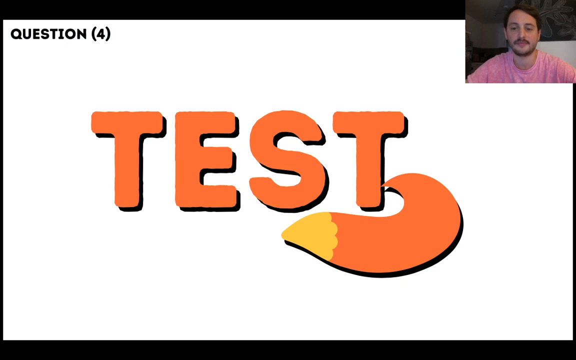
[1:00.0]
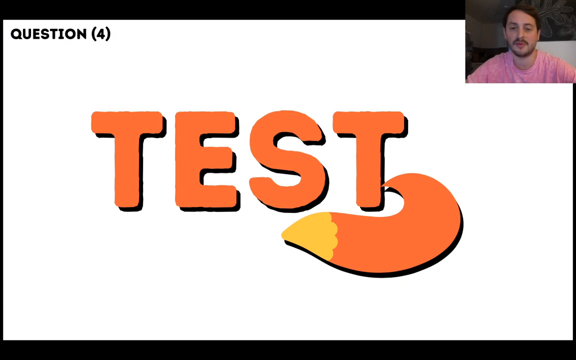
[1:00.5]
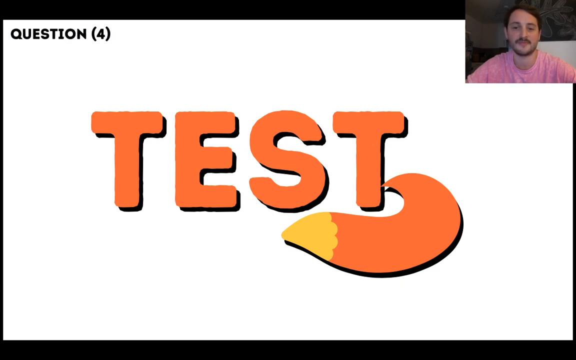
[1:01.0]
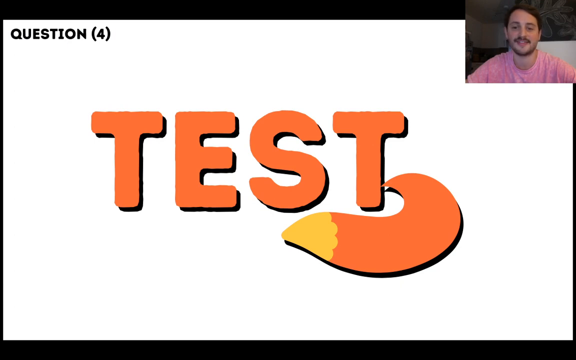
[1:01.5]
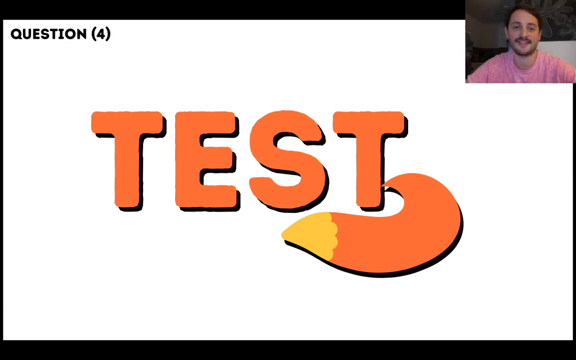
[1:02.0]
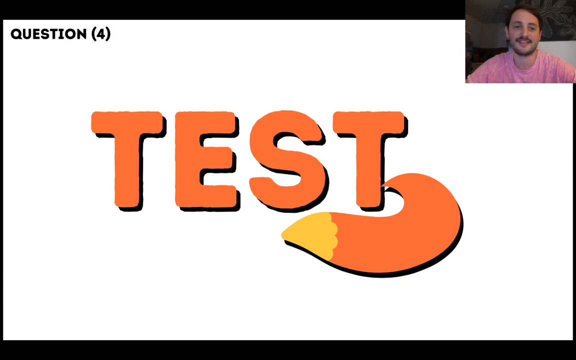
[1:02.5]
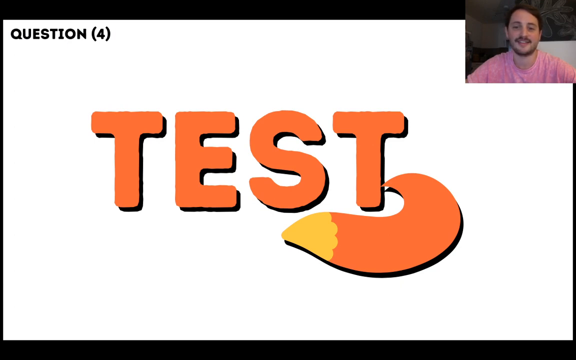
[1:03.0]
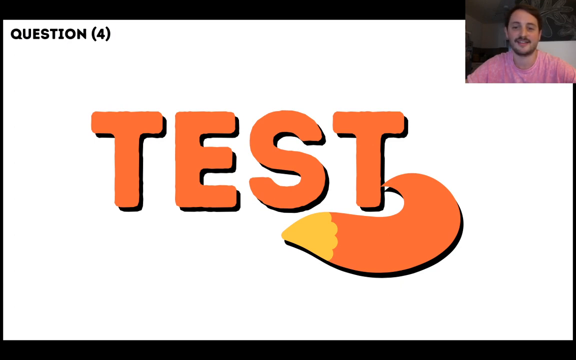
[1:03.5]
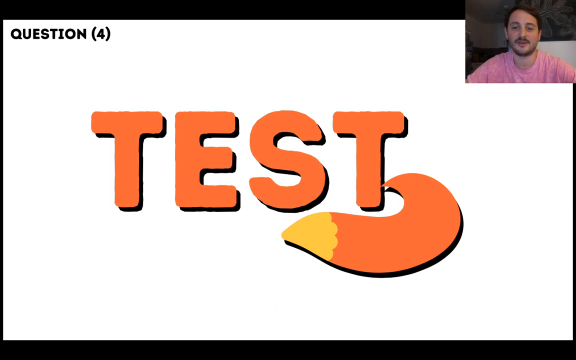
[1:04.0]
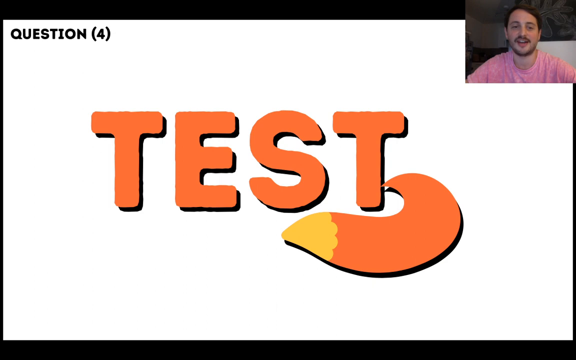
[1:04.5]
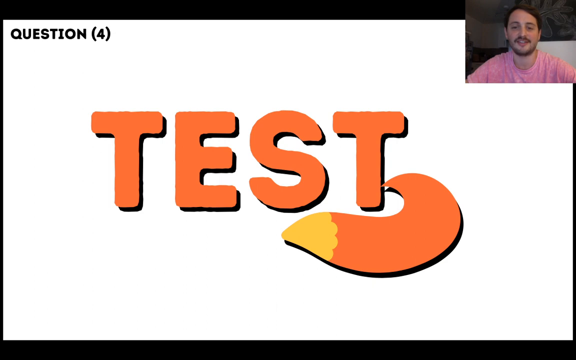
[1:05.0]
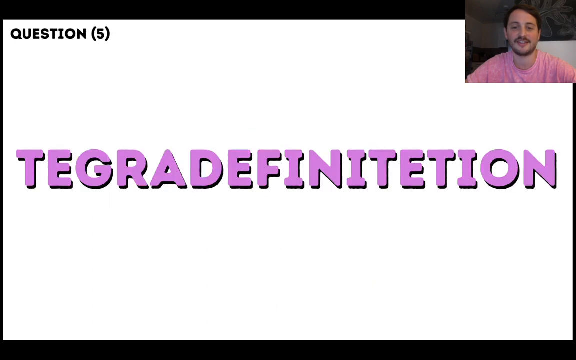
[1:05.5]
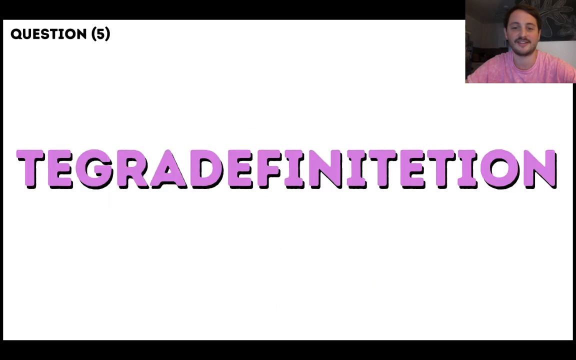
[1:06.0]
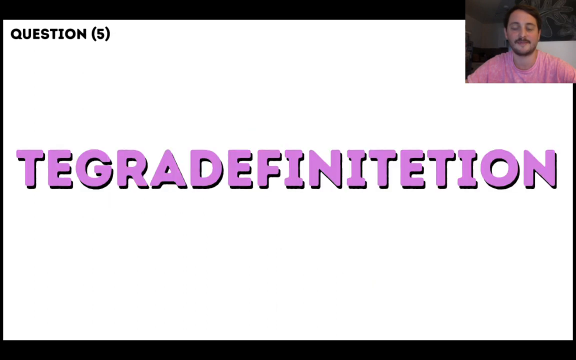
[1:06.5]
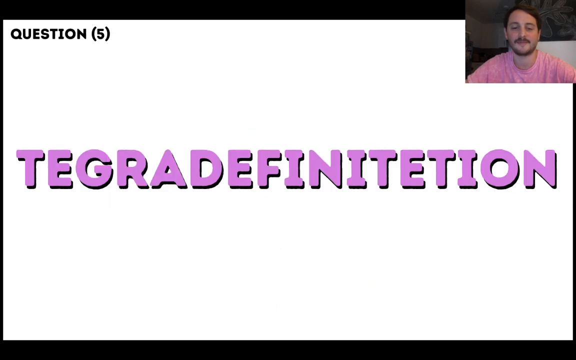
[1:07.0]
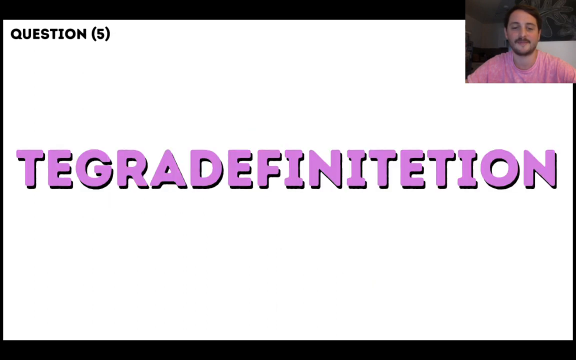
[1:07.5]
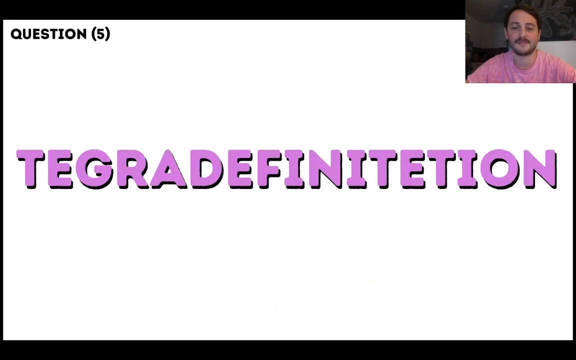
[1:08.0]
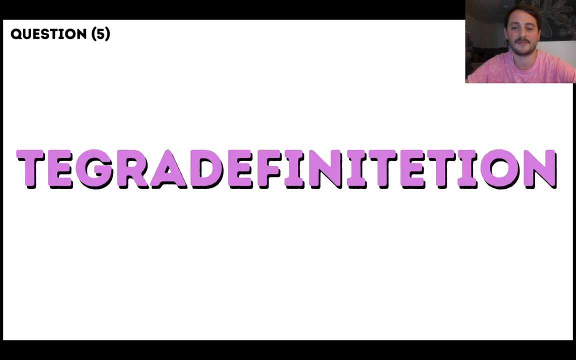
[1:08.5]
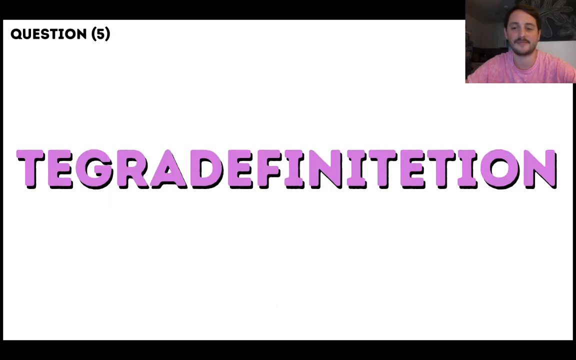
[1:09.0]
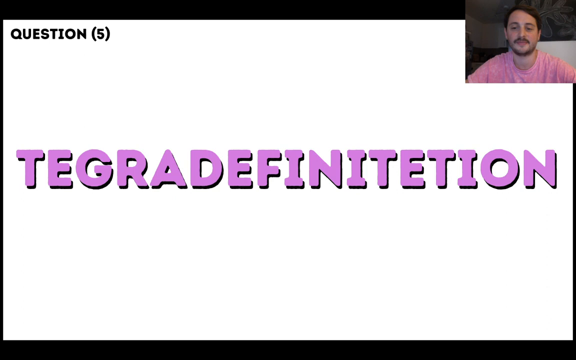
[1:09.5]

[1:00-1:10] "Question (4)" appears in black at the top left, with the man in the top right, on a white background. The word "TEST" is shown in large, orange, all-caps, 3D-style letters that take up most of the screen, with a black backing behind the orange text. Coming out of the final T is what looks like a fox's tail: orange, with a slightly yellow tip with little squiggles. The scene then switches to question five.